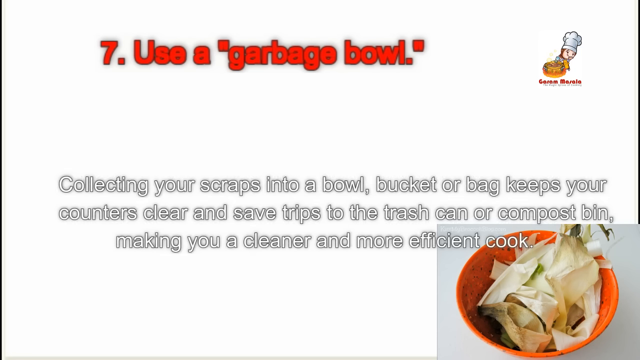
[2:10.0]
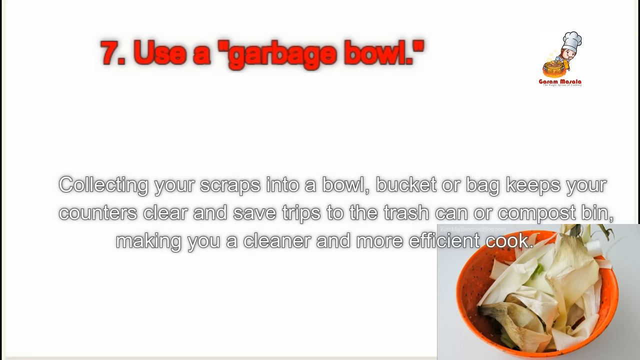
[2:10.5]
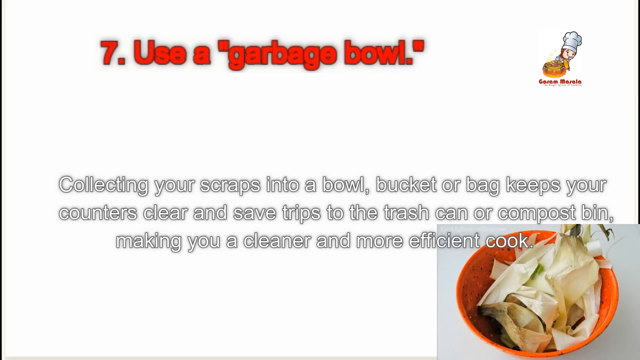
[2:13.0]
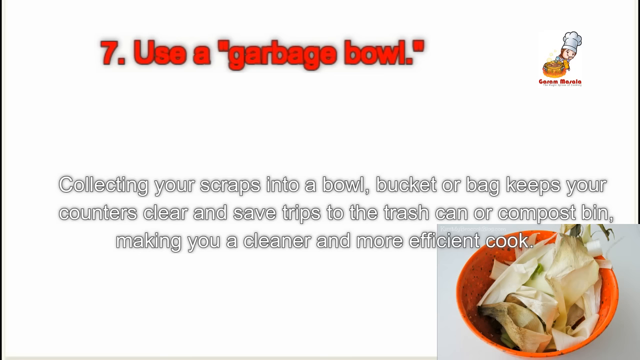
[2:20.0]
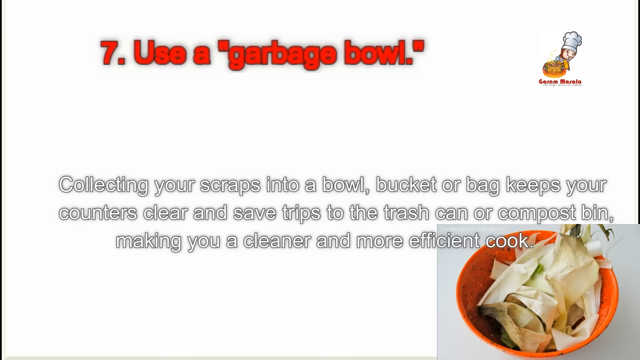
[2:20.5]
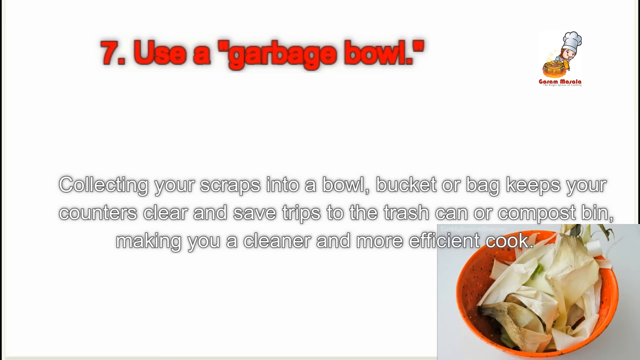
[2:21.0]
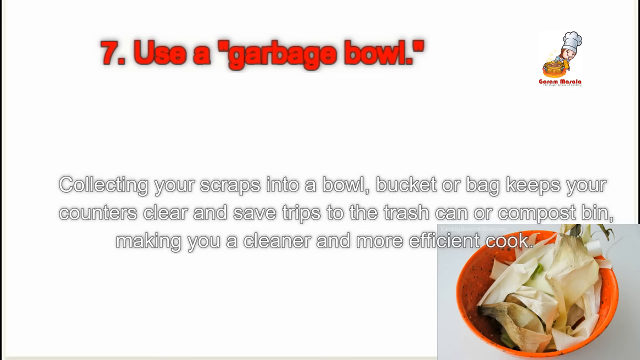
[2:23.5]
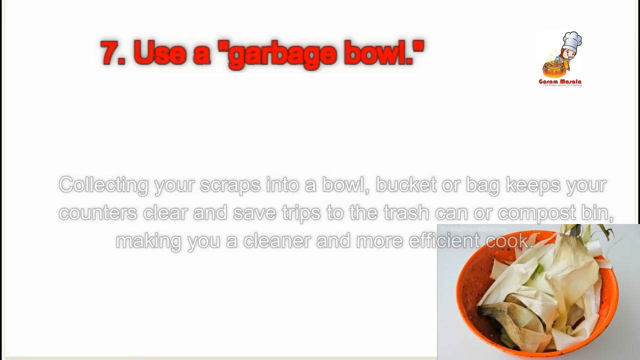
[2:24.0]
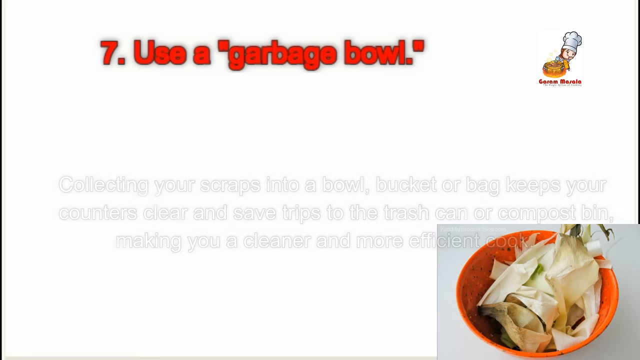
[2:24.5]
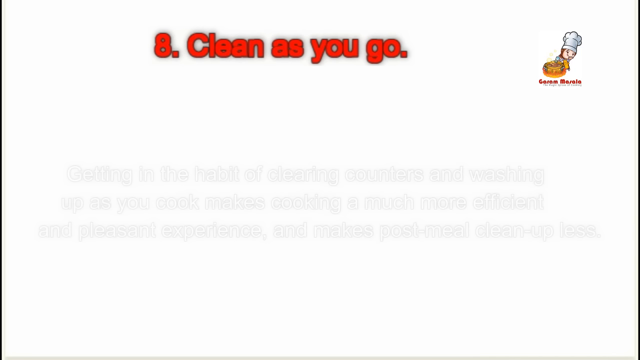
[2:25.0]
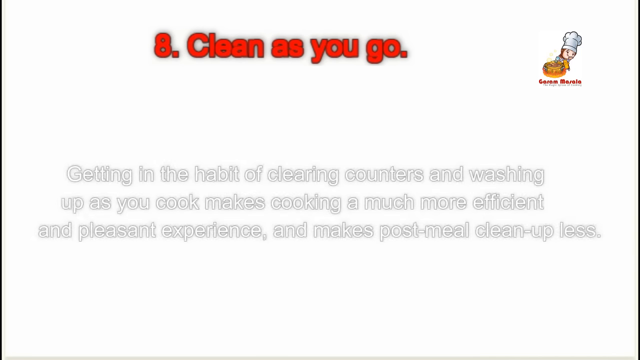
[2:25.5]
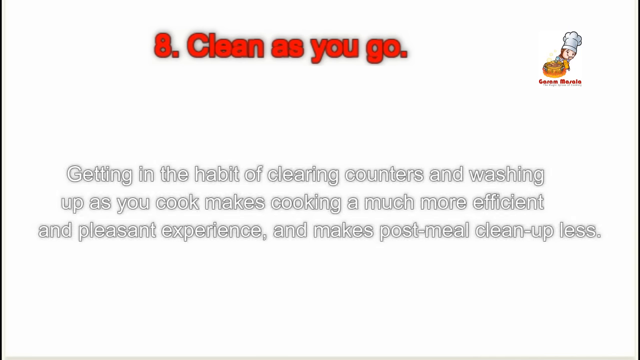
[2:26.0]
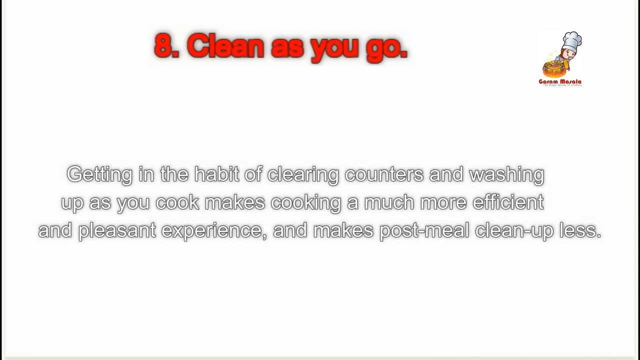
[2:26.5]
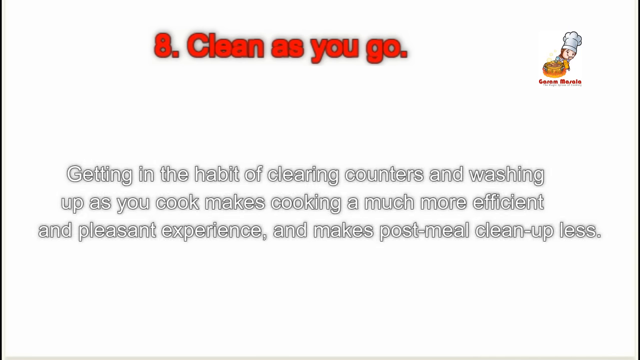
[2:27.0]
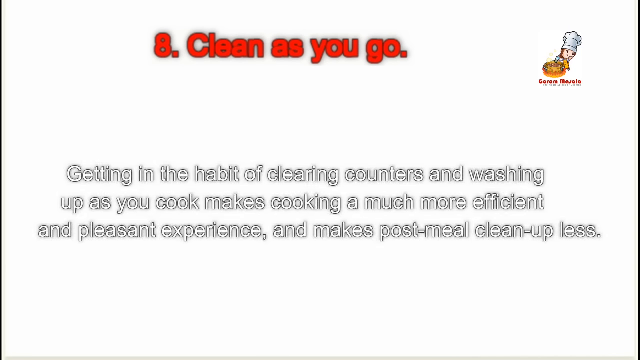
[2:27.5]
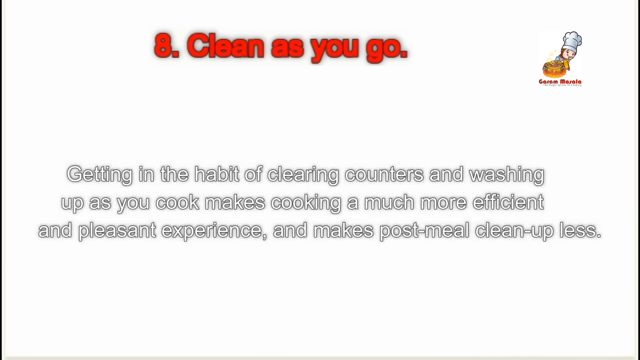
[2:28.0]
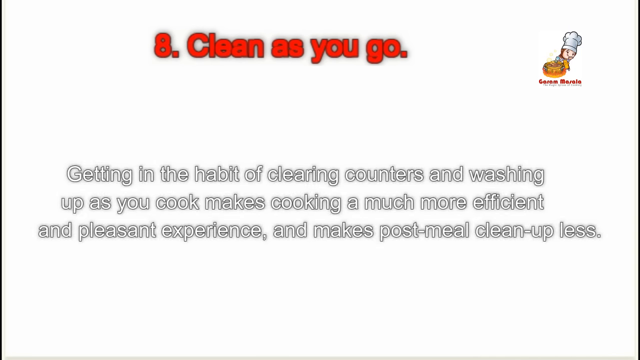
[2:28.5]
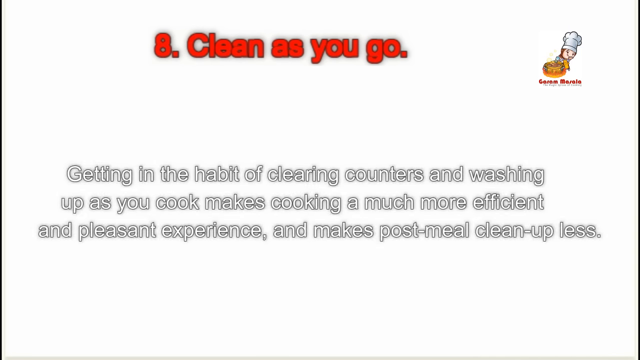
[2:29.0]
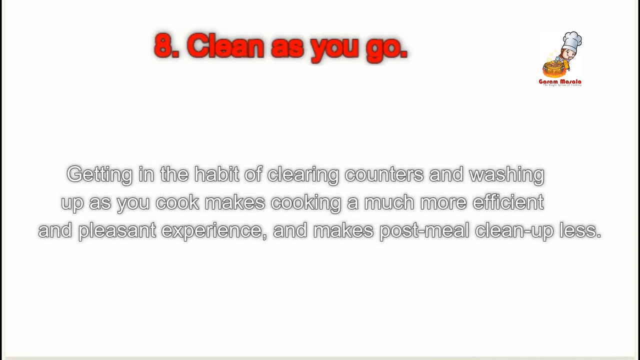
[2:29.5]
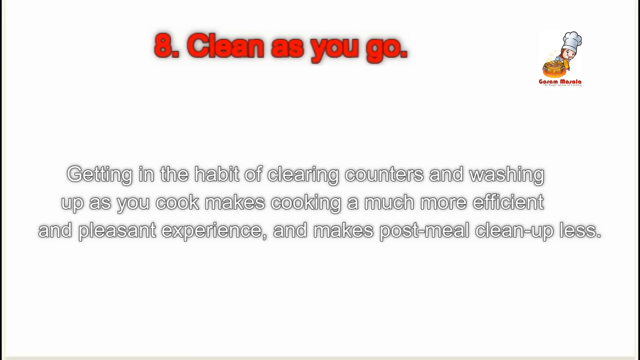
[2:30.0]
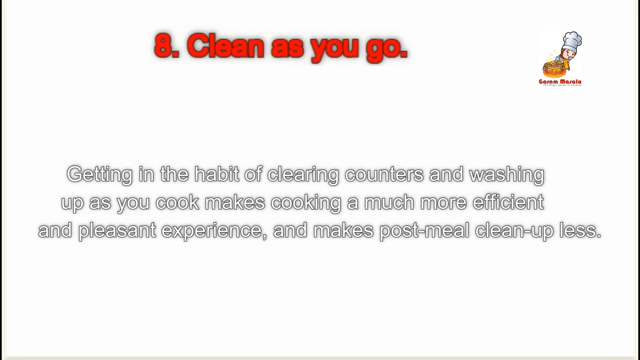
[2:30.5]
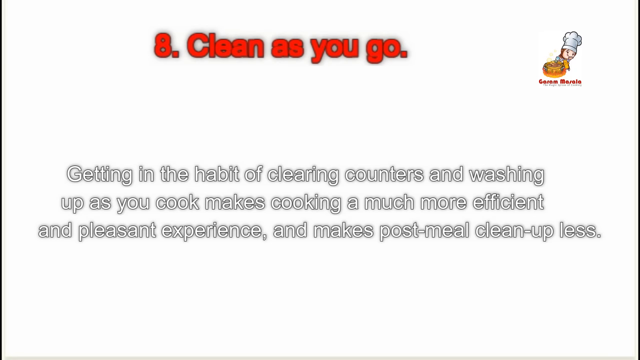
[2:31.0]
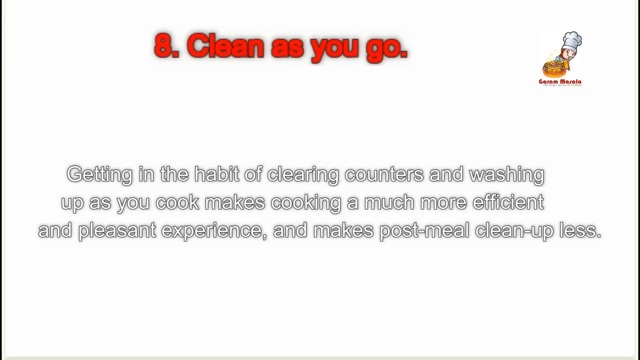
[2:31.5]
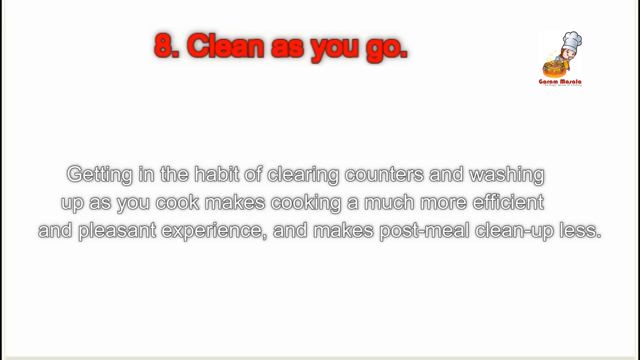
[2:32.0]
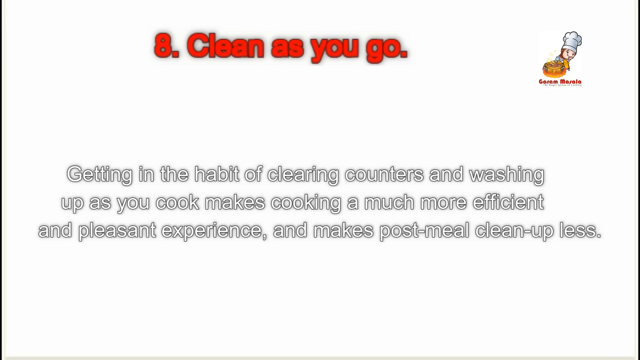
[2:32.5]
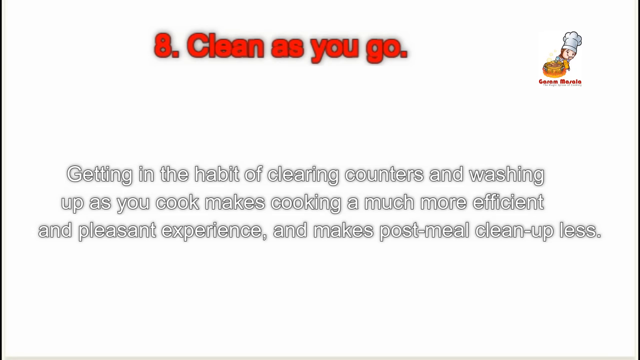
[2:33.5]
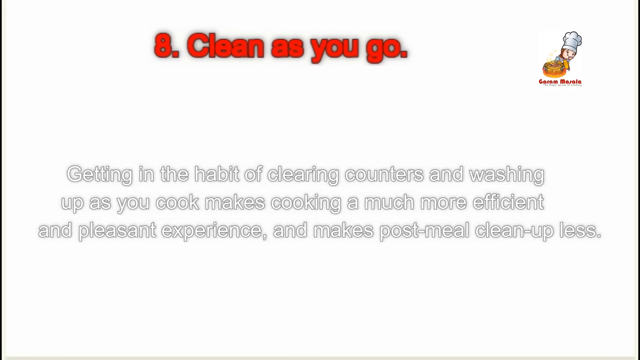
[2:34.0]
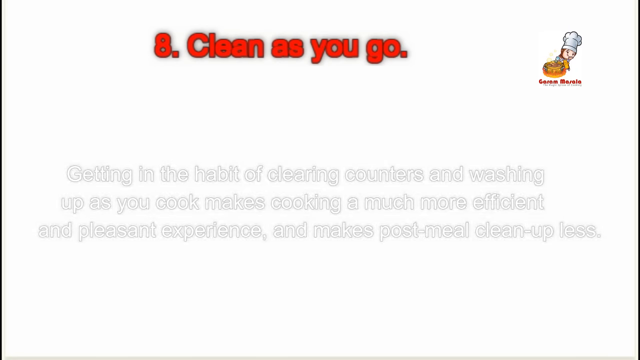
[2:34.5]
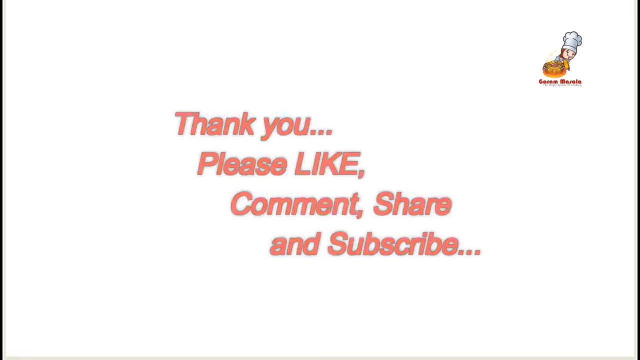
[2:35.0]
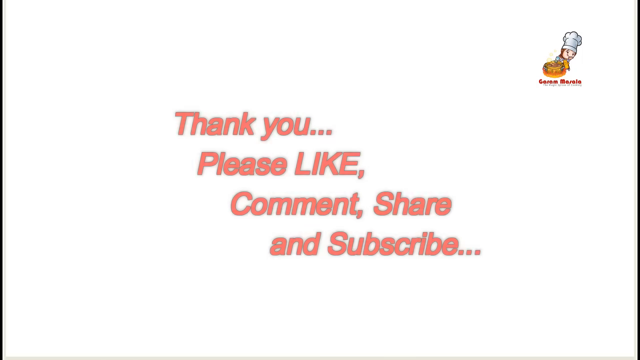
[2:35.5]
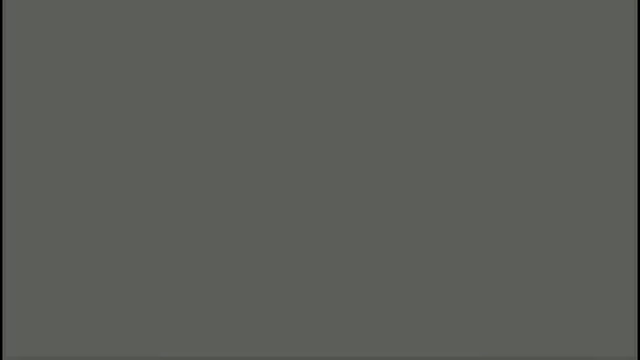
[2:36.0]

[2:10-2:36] A slide has red text on top reading "7, use a garbage bowl." On the right is a logo that looks like a cartoon image of a chef wearing a white chef hat with a dish in front of him and some red text below. In the middle of the screen, white text with a gray border reads "collecting your scraps into a bowl, bucket, or bag keeps your counters clear and saves trips to the trash can or compost bin, making you a cleaner and more efficient cook." An orange garbage bowl with trash inside it is in the lower right corner, and the background of the whole slide is white. The video cuts to another slide with red text reading "8, clean as you go," and white text underneath reading "getting in the habit of clearing counters and washing up as you cook makes cooking a much more efficient and pleasant experience."